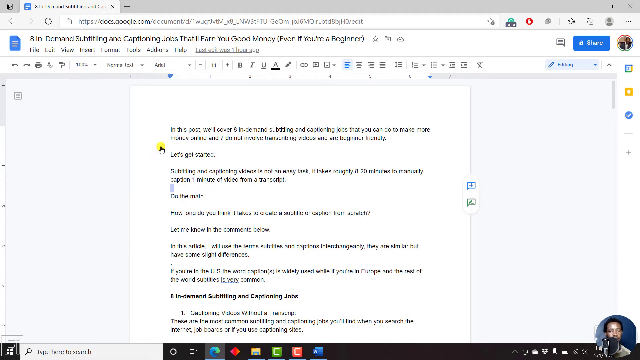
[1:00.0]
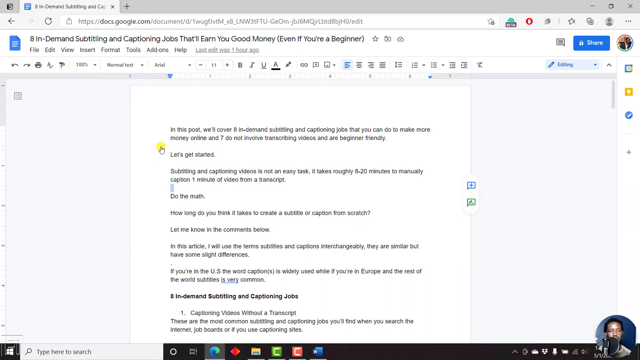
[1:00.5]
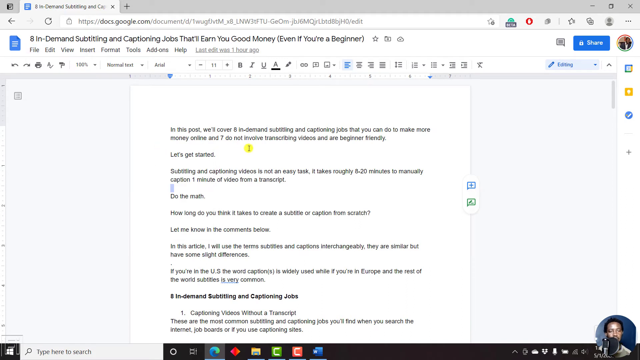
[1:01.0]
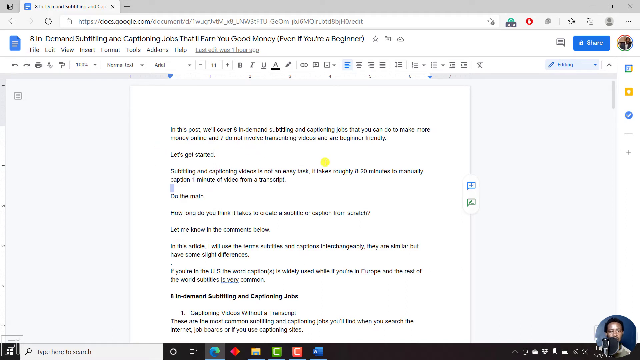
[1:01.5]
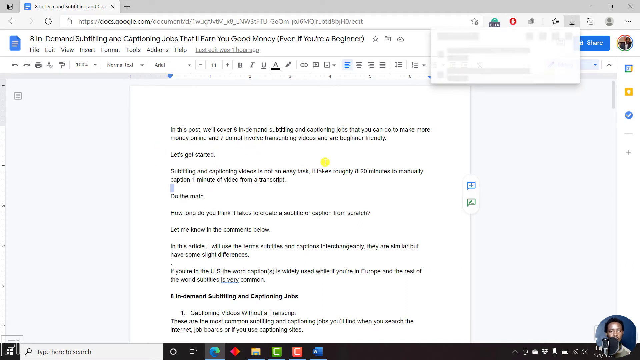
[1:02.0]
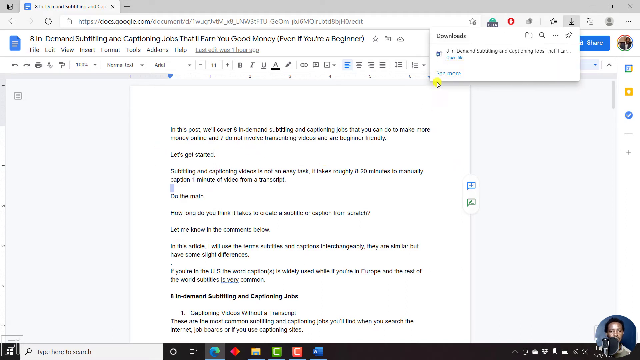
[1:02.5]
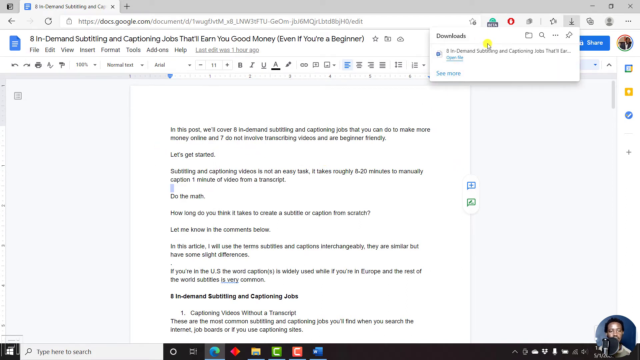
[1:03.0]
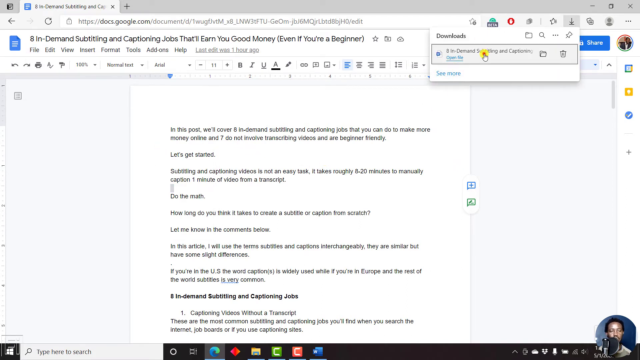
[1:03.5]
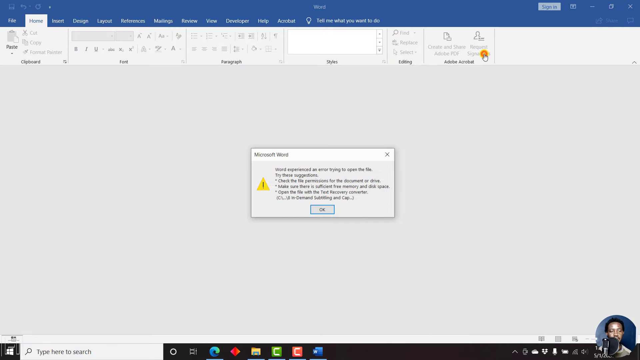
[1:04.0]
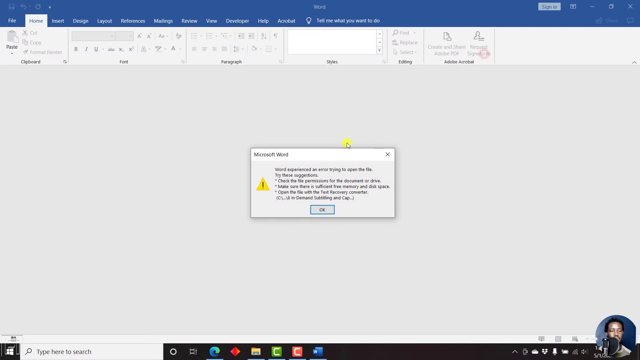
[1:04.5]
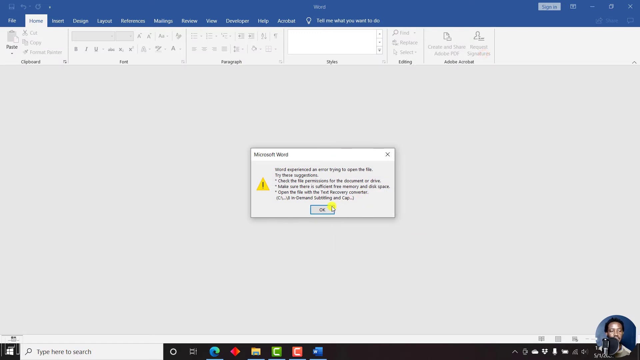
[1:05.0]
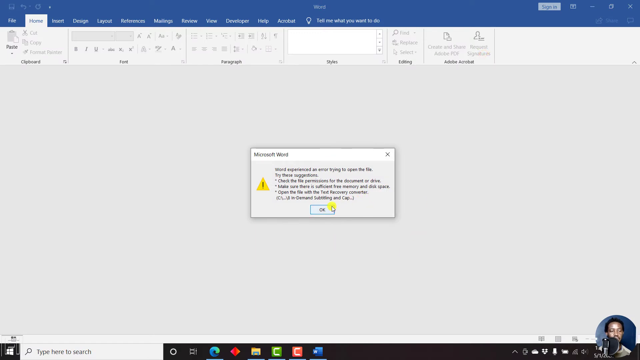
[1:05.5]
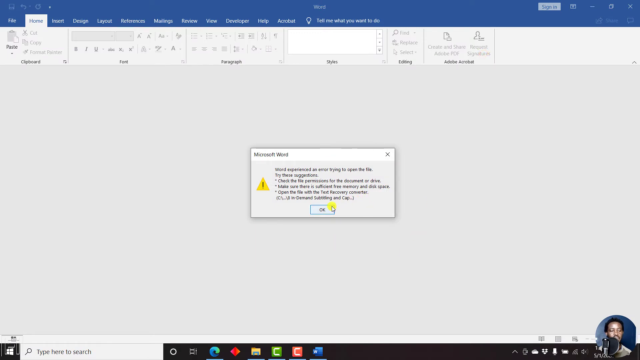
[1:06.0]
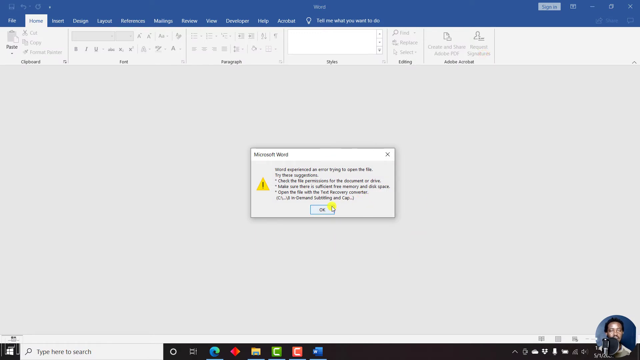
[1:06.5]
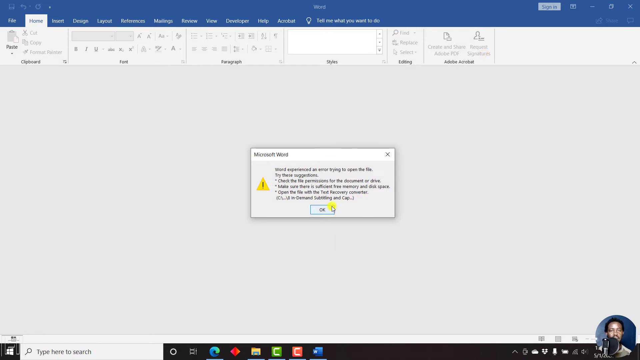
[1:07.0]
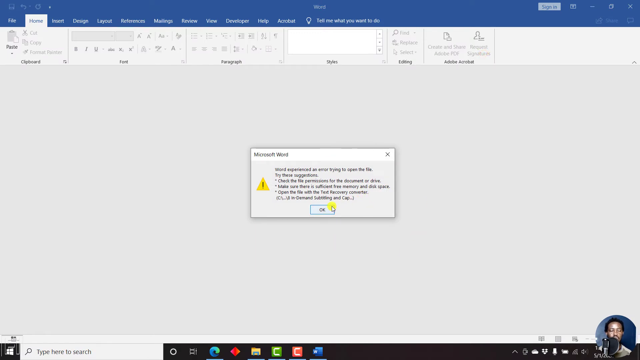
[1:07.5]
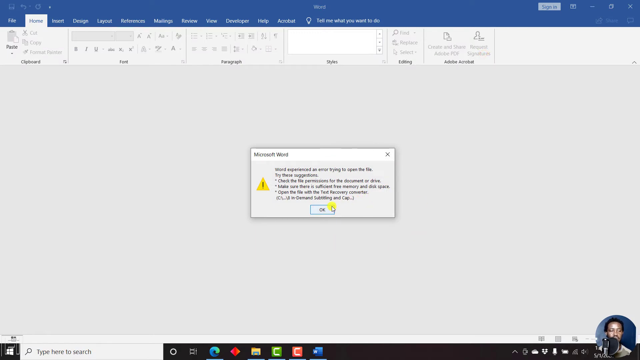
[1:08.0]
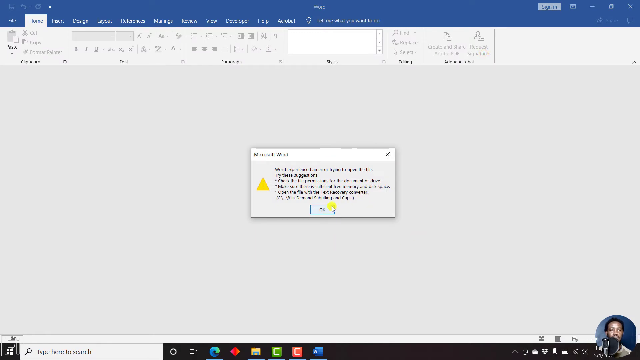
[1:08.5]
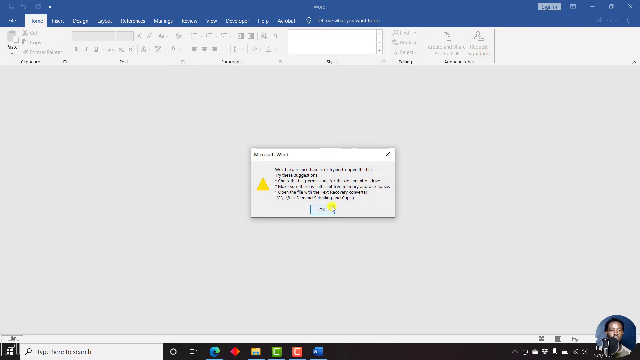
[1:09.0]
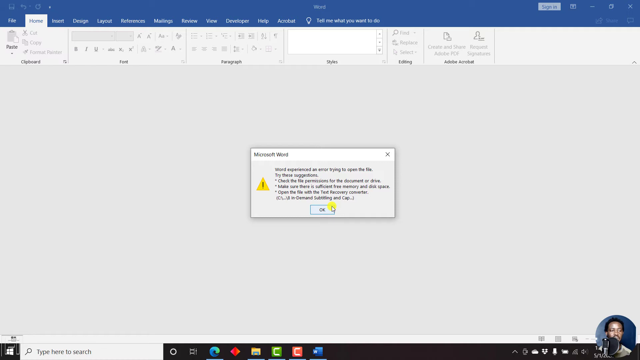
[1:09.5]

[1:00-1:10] The internet browser is open on the Google Docs site, showing the same Google document about in-demand subtitling and captioning jobs that can earn good money. In the top right-hand corner of the browser, a small box opens that says "Downloads", showing that the person has downloaded the Google Doc. He moves the cursor to the right and clicks the downloaded document, and the Microsoft Word program reappears with the same error message saying it cannot open the file.